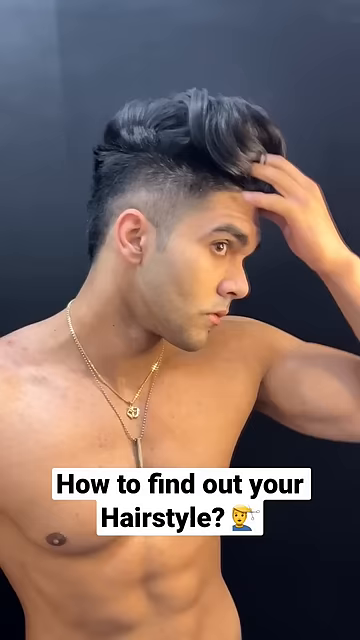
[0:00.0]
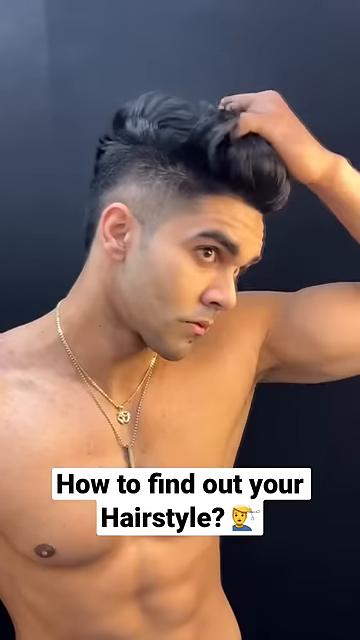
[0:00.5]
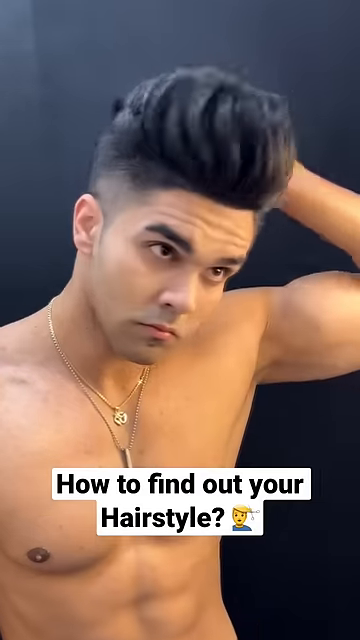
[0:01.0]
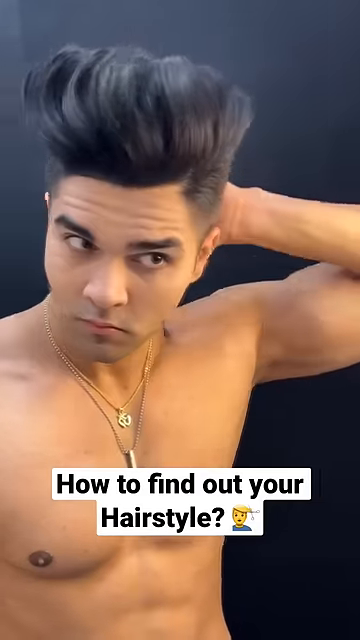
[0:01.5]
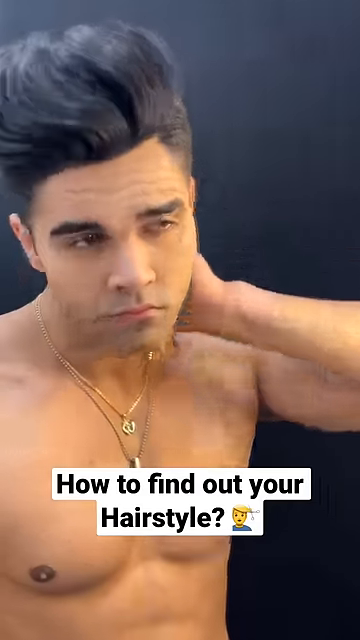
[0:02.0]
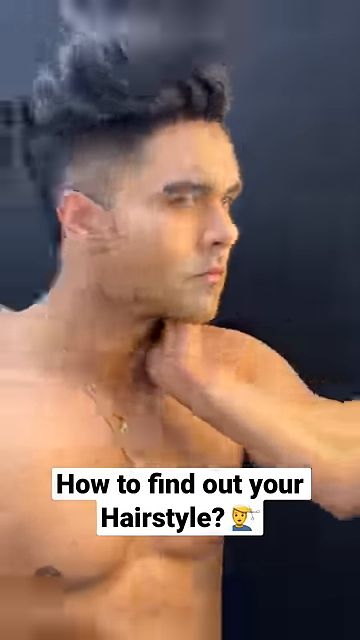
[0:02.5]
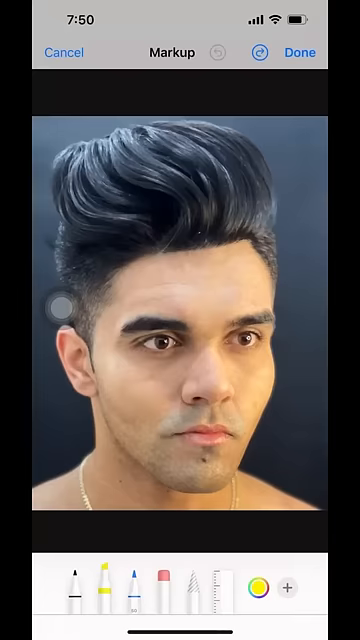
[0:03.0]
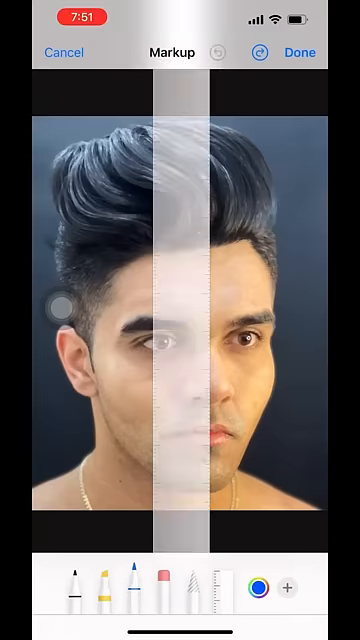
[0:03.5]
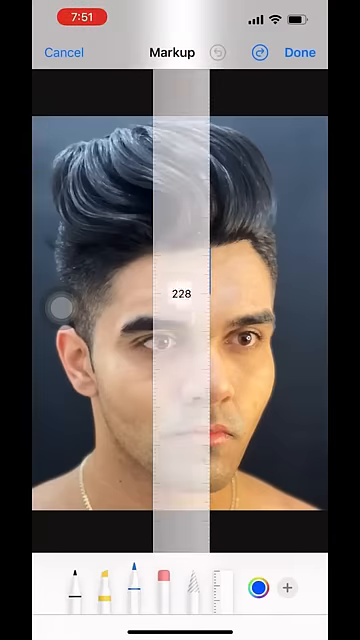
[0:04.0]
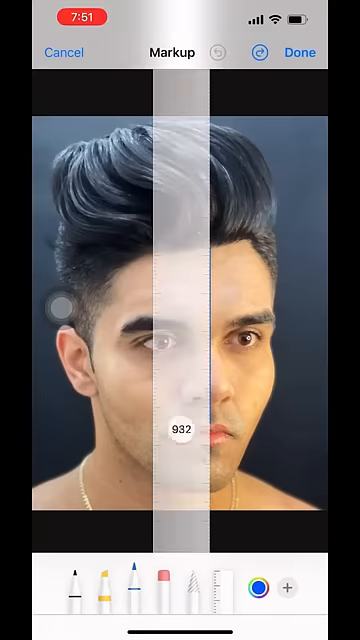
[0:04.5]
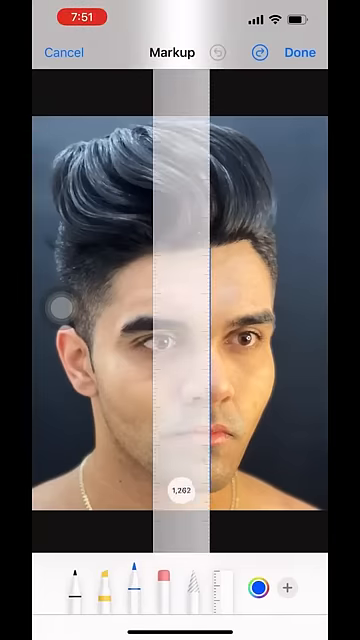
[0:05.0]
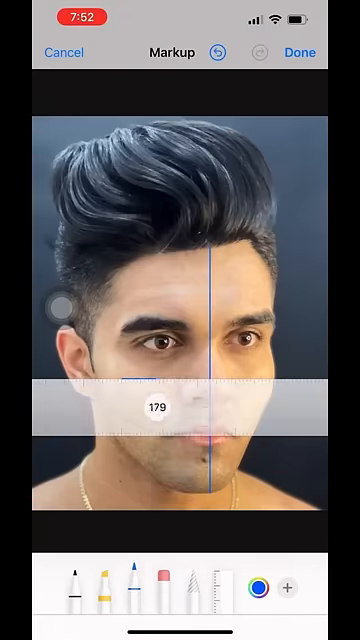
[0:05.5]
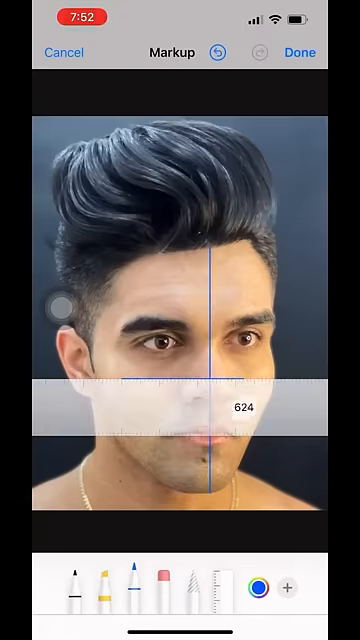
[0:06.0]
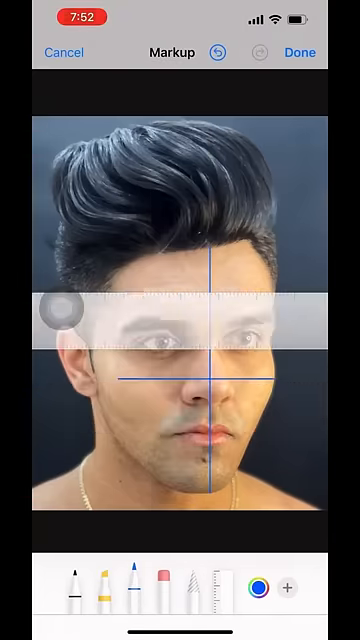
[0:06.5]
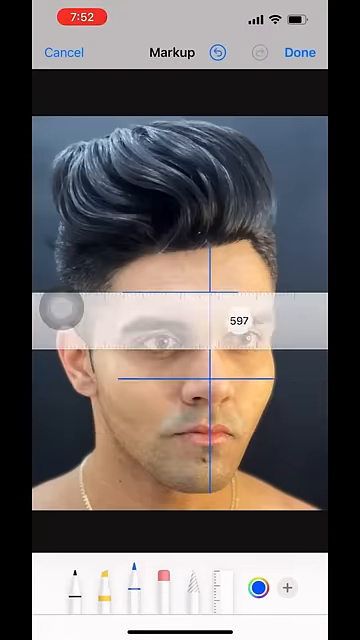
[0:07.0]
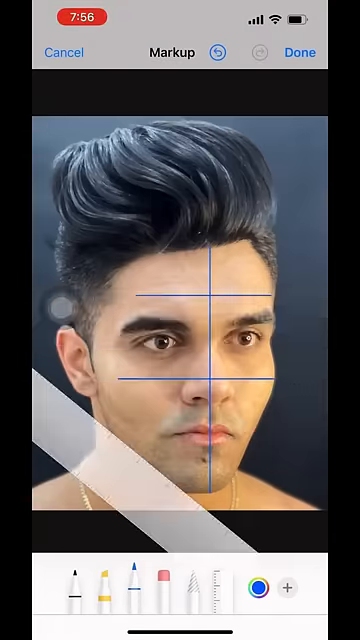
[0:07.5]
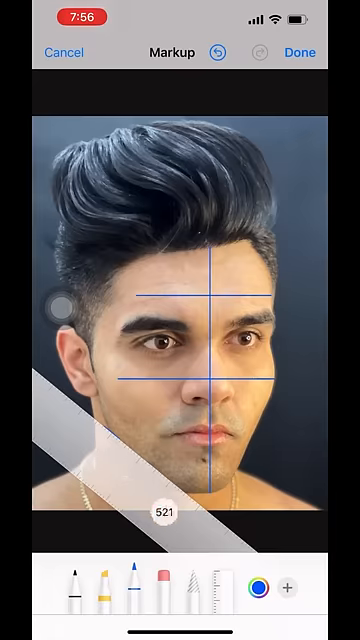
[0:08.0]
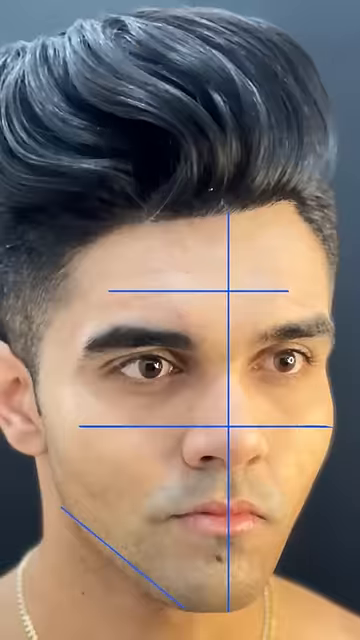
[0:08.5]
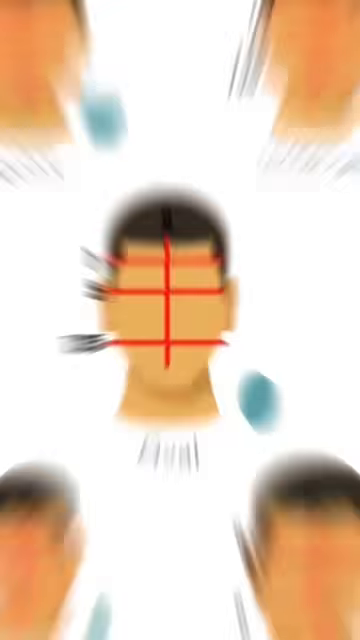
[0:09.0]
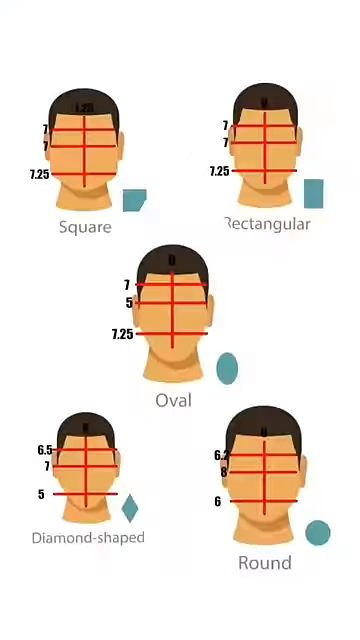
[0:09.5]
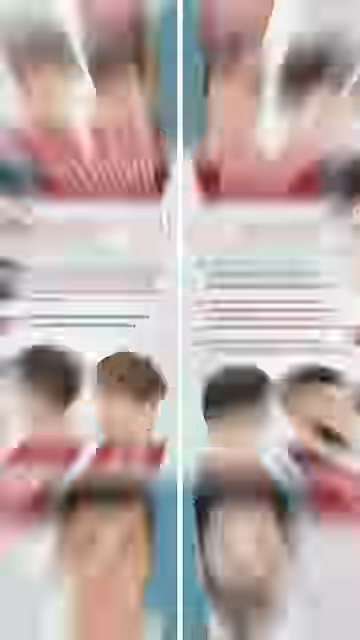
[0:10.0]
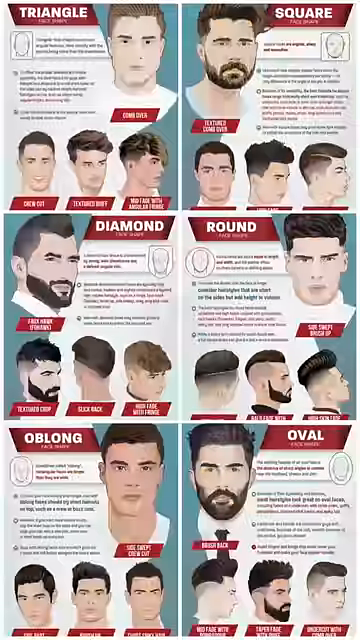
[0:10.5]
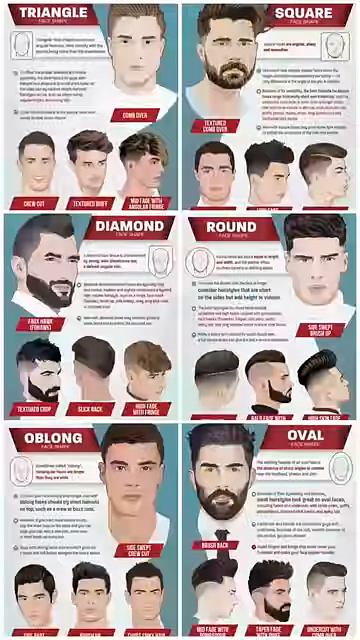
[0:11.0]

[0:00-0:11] A shirtless man with a pompadour hairstyle runs his fingers through his hair as he looks off to the side. He is visible only from his midsection up. At the bottom, text reads "how to find out your hairstyle" alongside an emoji of a person getting a haircut. His hair is short on the sides and fairly long on top, slicked back, and he runs his fingers through it. He wears two gold necklaces but no shirt. He then looks at his phone, about to start doing some edits, and the view switches to his phone screen, which shows a picture of his face. He appears to be editing his face using the application's software. The application shows hairstyles that match each face shape, such as hairstyles for a square, rectangular, oval, or diamond-shaped face, indicating which hairstyles go with which face shapes.